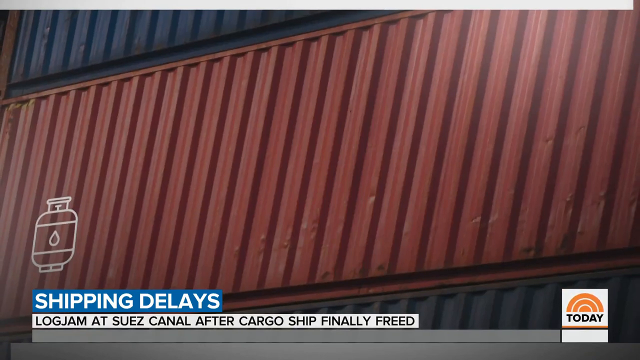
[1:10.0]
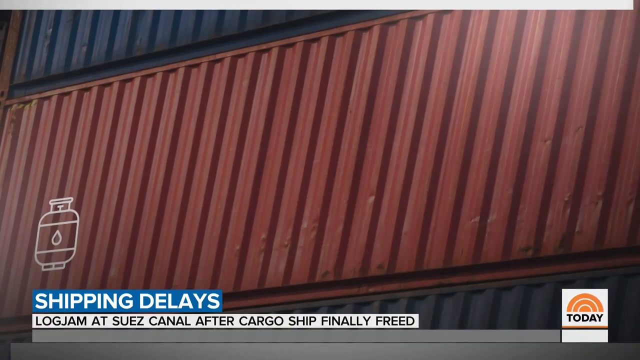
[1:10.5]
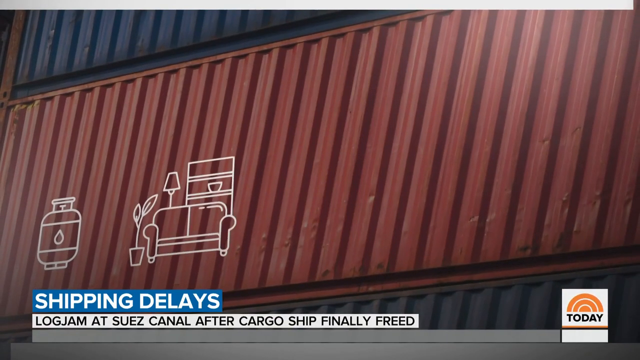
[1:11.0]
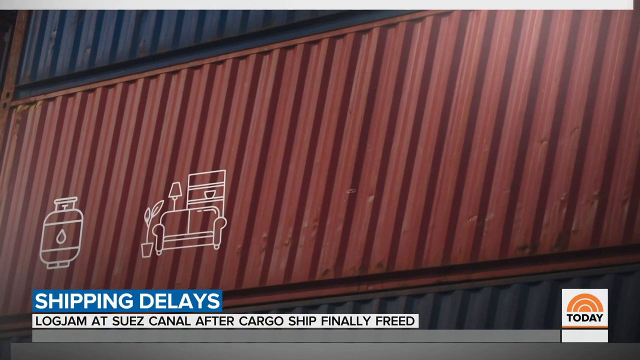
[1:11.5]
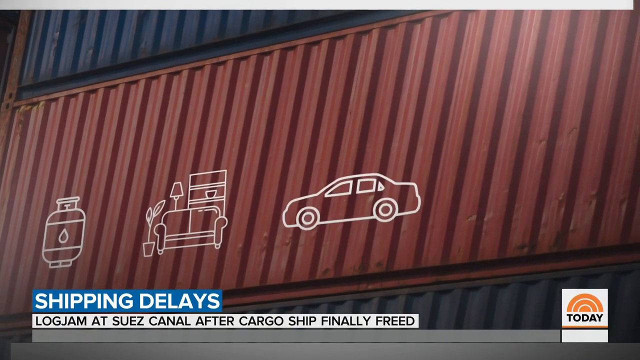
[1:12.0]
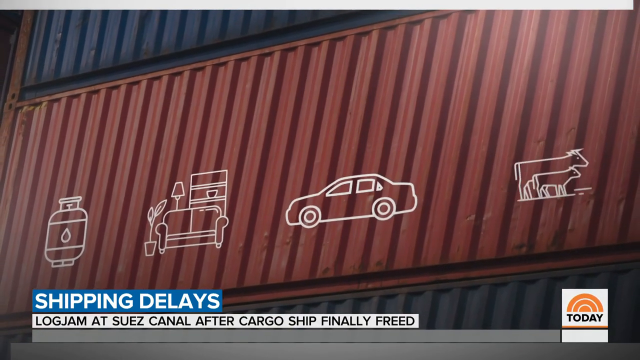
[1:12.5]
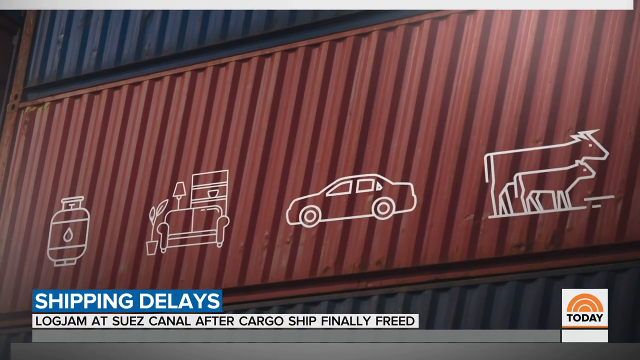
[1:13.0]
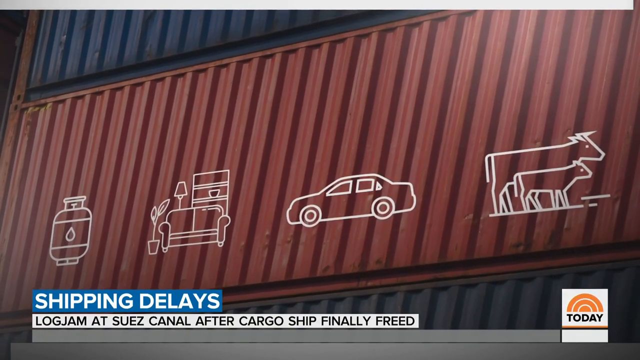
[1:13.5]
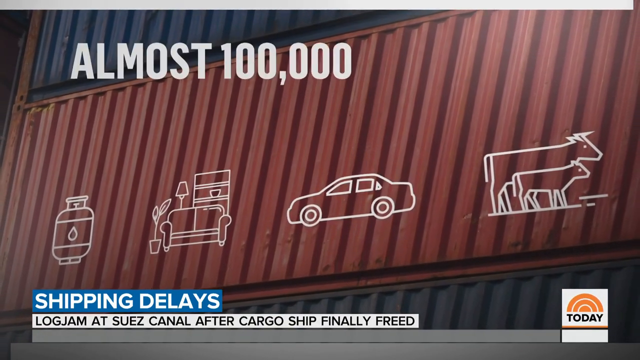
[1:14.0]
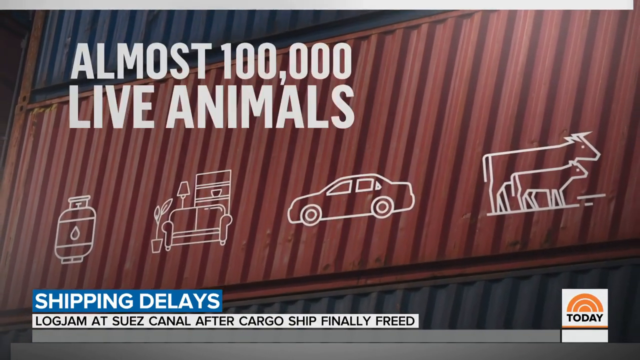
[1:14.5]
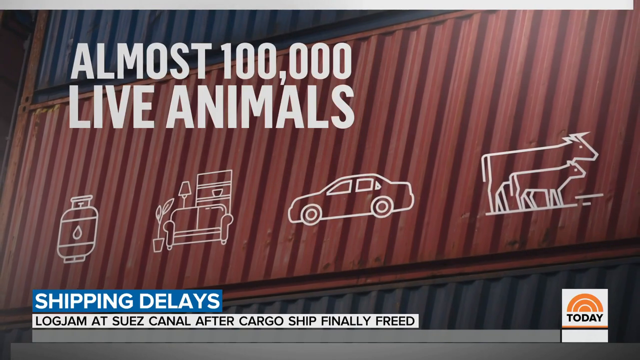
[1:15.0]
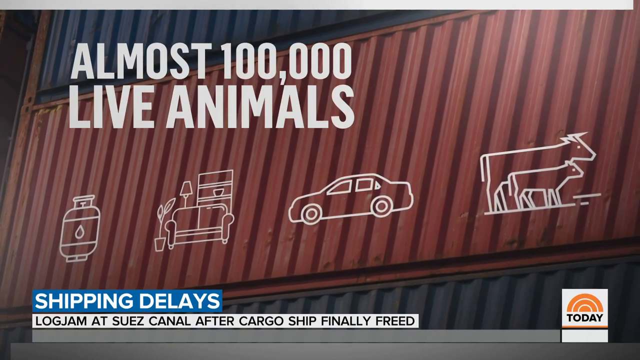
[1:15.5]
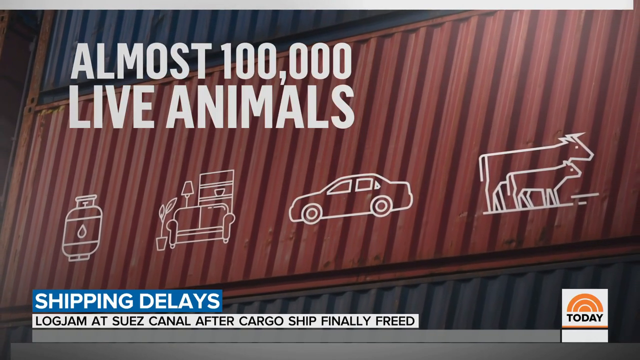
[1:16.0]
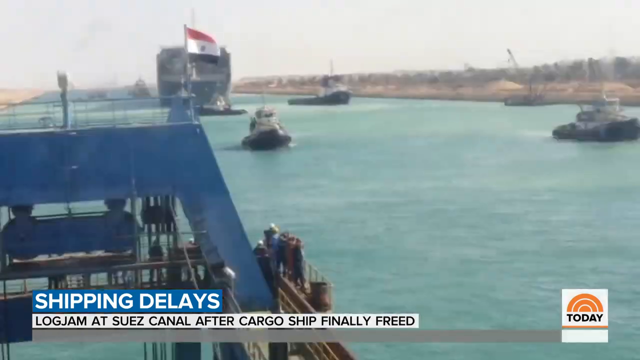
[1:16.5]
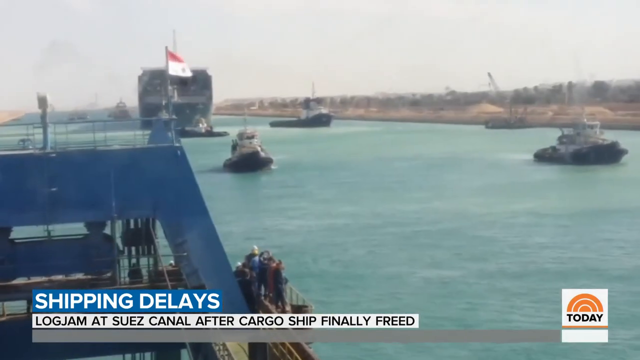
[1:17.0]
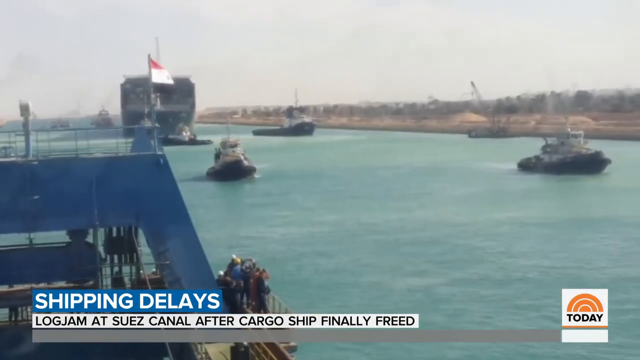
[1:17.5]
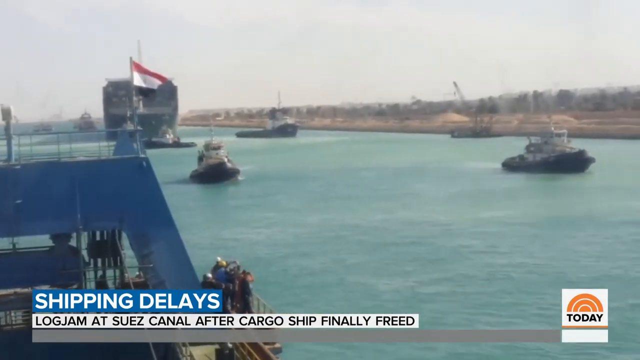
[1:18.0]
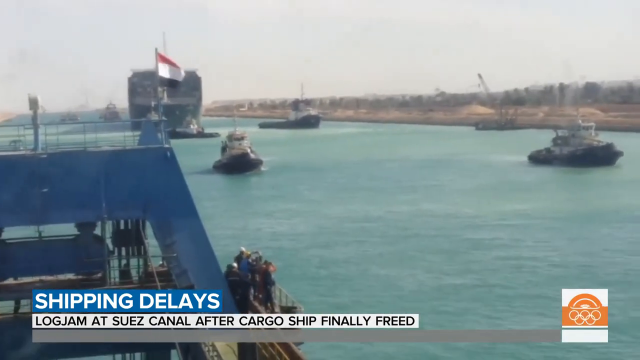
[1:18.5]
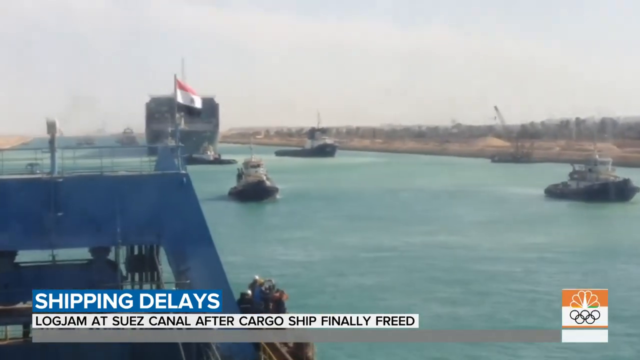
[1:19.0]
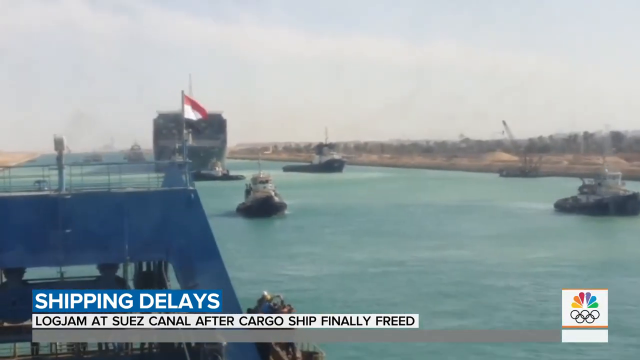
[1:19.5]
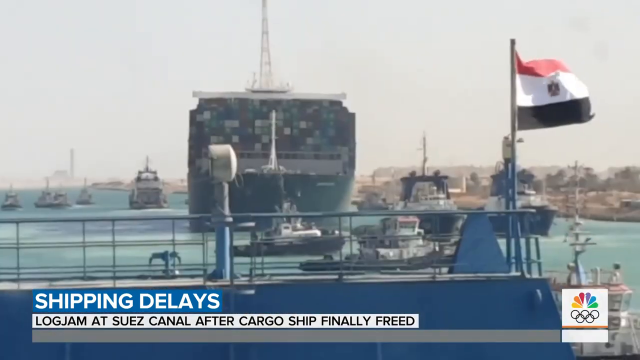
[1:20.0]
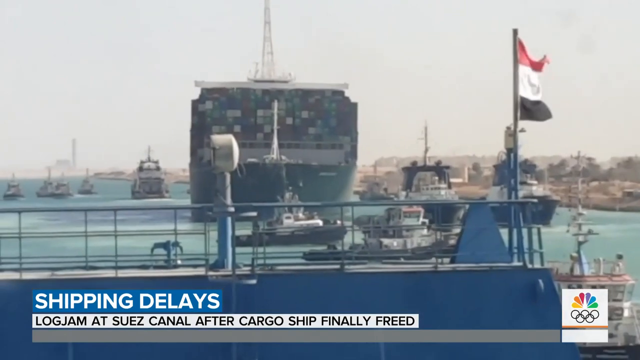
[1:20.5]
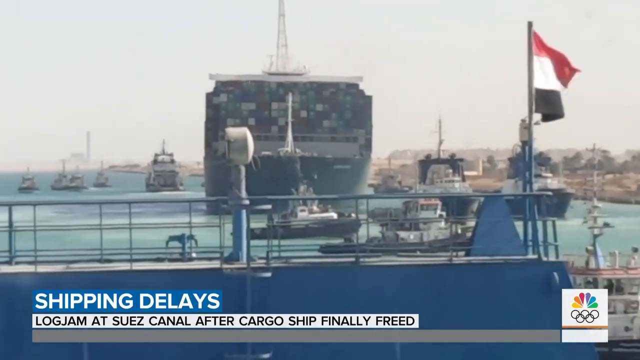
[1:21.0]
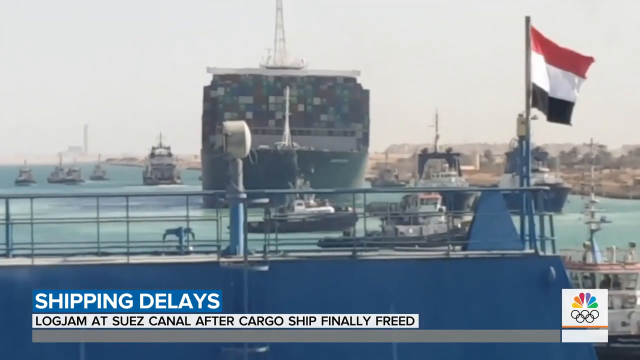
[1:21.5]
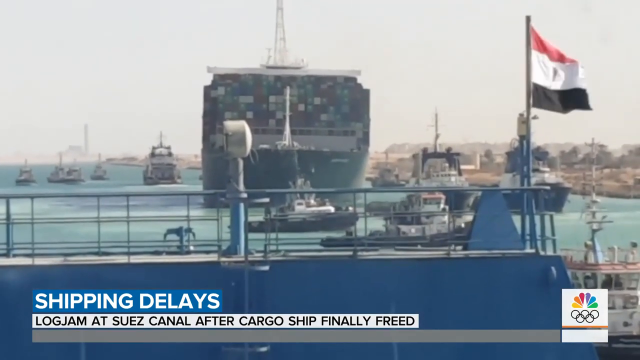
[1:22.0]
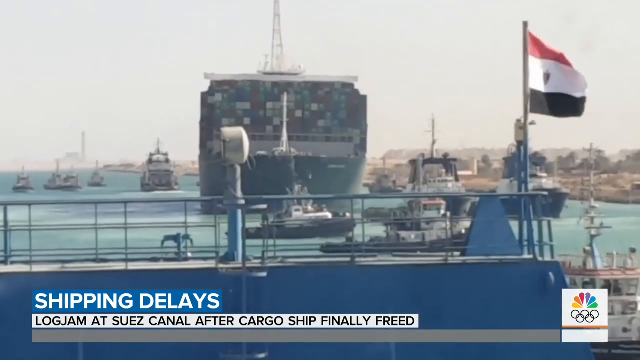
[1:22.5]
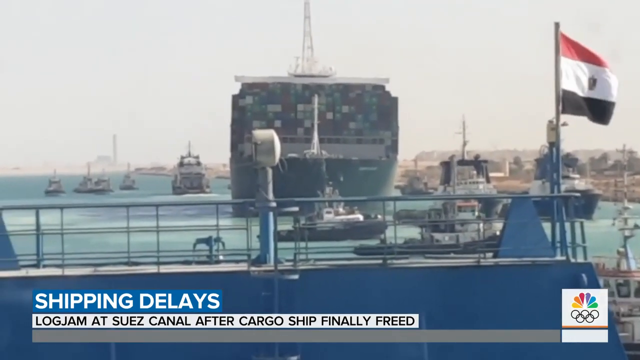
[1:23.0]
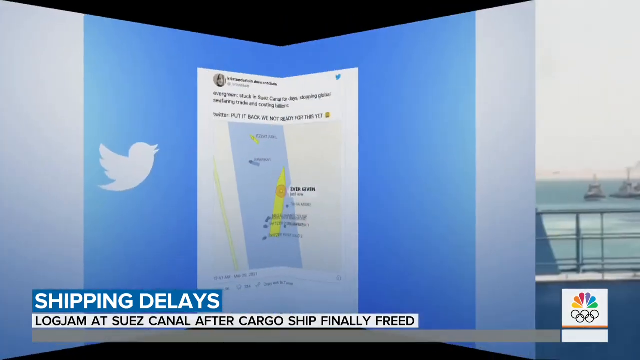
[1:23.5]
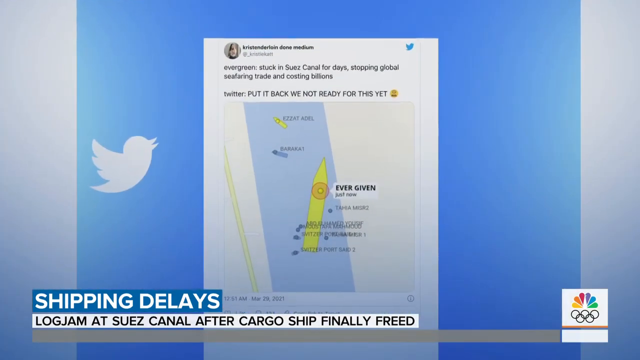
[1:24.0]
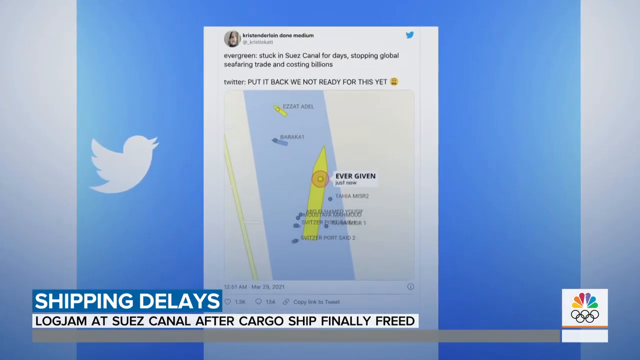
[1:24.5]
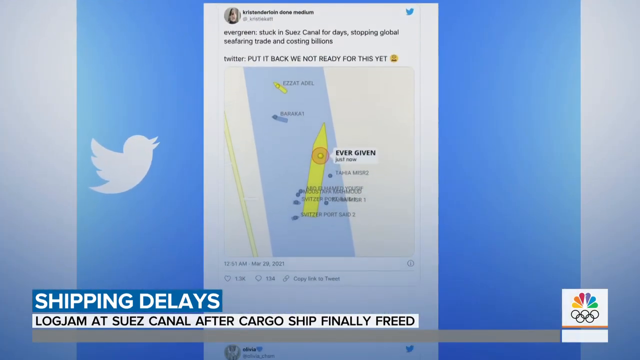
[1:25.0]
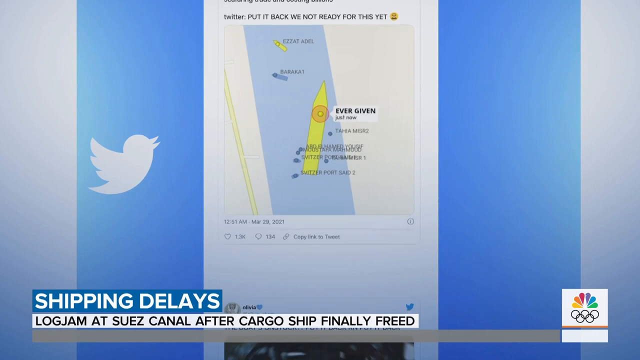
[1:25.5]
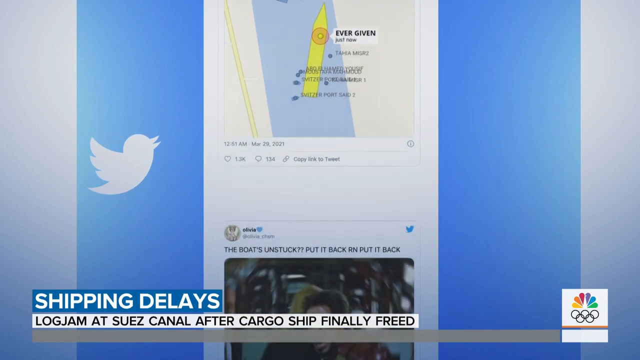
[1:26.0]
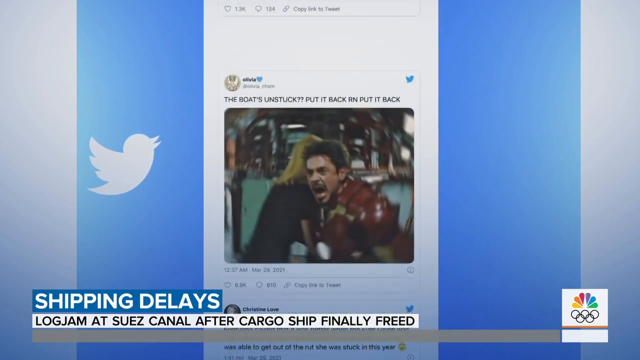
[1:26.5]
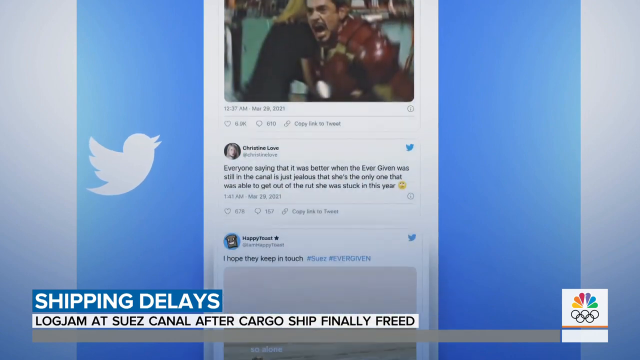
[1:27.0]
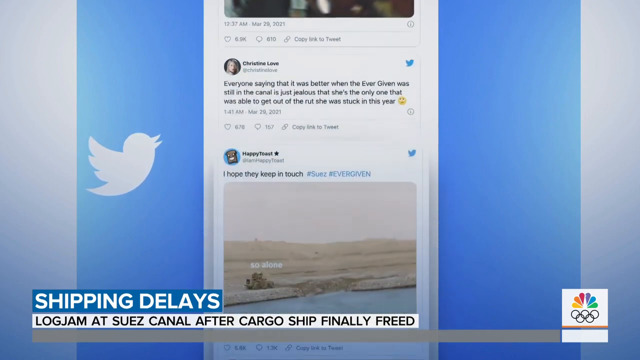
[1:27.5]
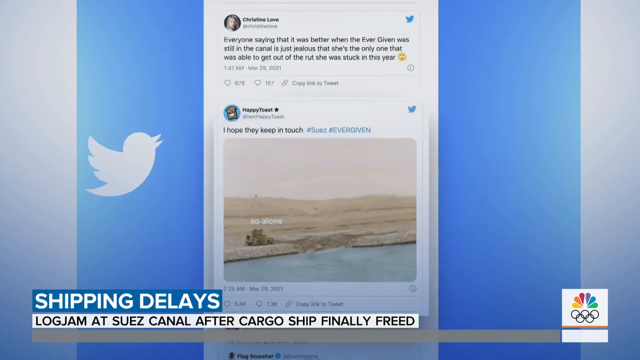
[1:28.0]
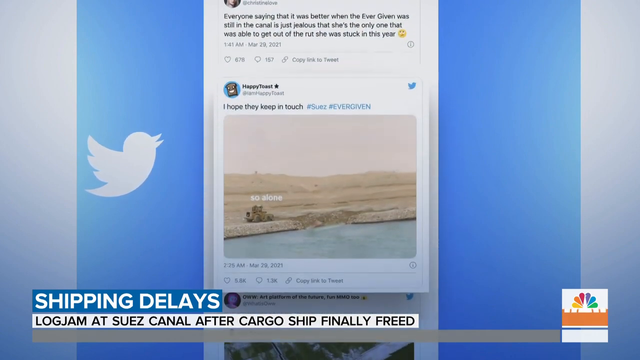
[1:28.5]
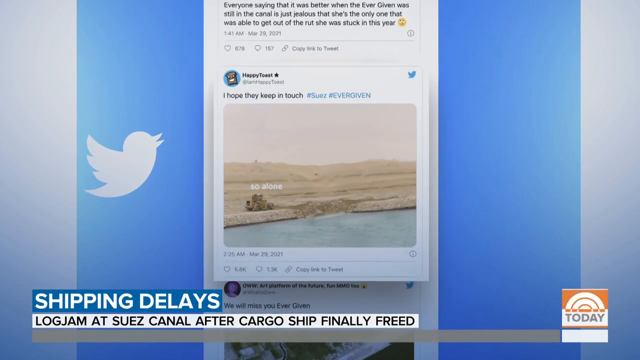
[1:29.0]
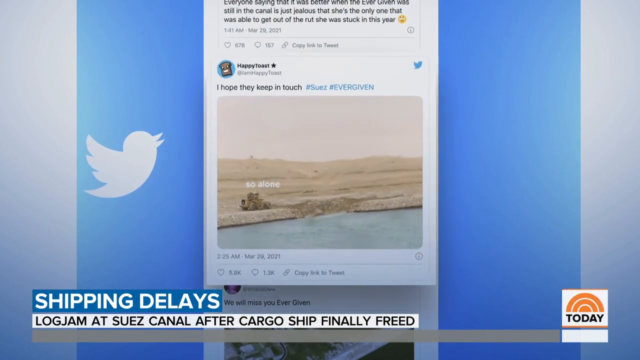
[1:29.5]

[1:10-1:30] The side of a maroon red cargo box shows four white line drawings. The left one appears to be a tank; to its right is a couch with a bookshelf, a lamp and a house plant; next is a sideways car; and to the right of that is what looks like two deer or two cows. Text above reads "almost 100,000 live animals." Next, different boats and ships are out at sea in clear blue water. One of the ships has a red, white and black striped flag. In the distance, one of the boats starts moving very slowly to the right, and there is a giant ship in the back. Then a tweet on Twitter reads "Evergreen stuck in Suez Canal for days, stopping global trade and costing billions," and the phone screen scrolls down.